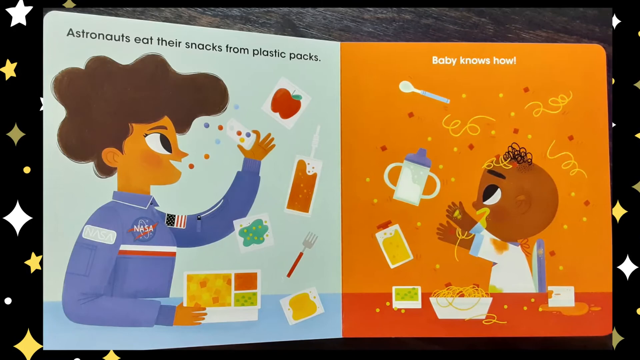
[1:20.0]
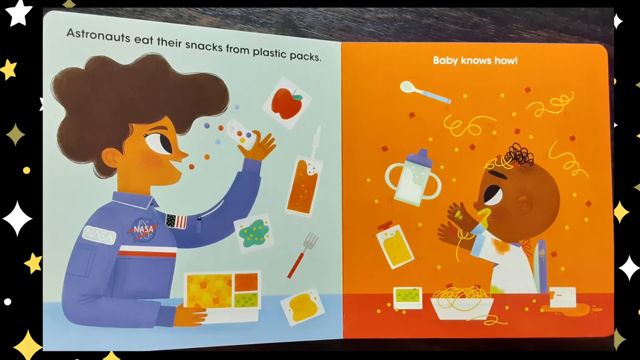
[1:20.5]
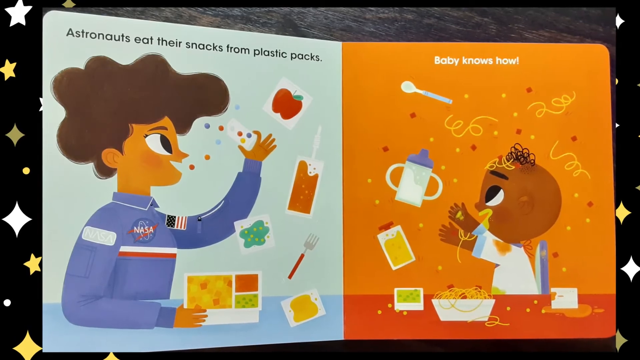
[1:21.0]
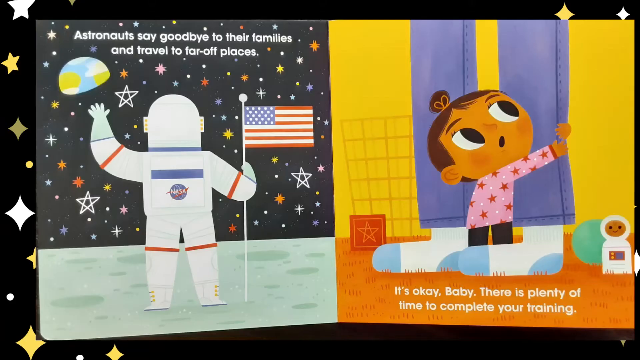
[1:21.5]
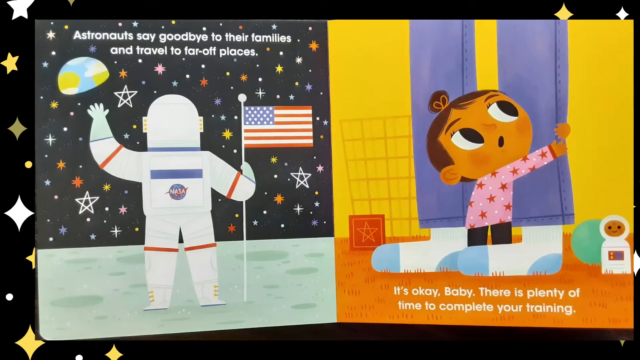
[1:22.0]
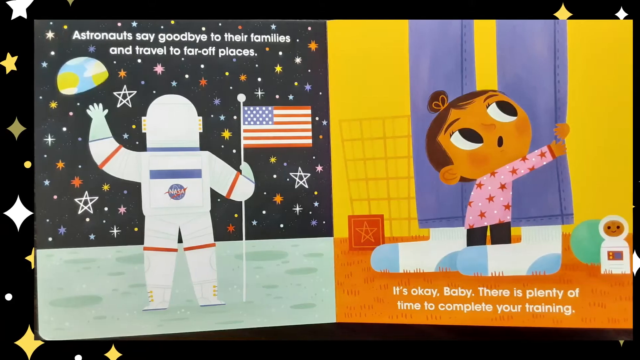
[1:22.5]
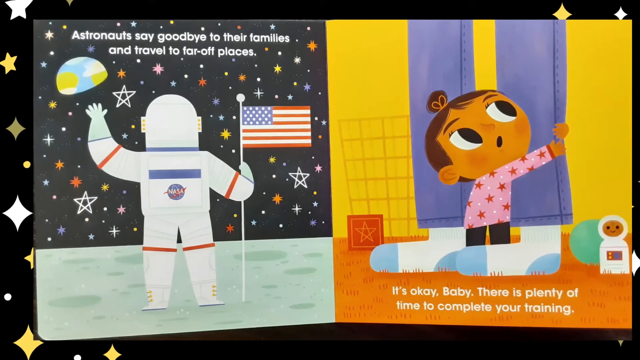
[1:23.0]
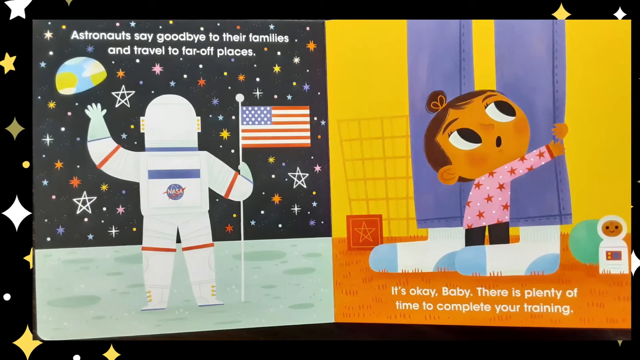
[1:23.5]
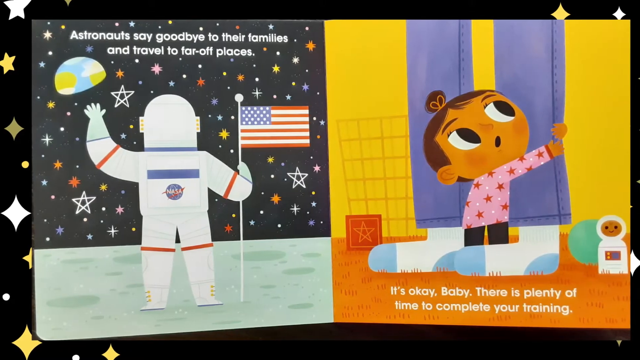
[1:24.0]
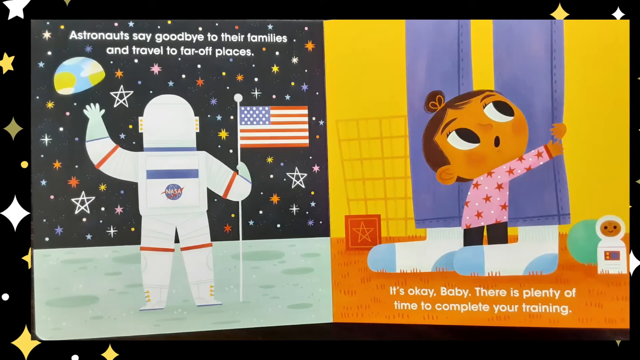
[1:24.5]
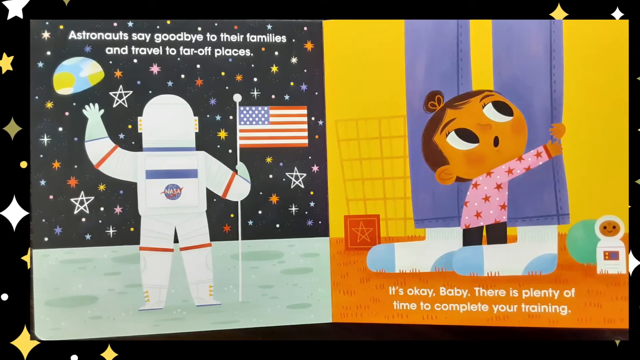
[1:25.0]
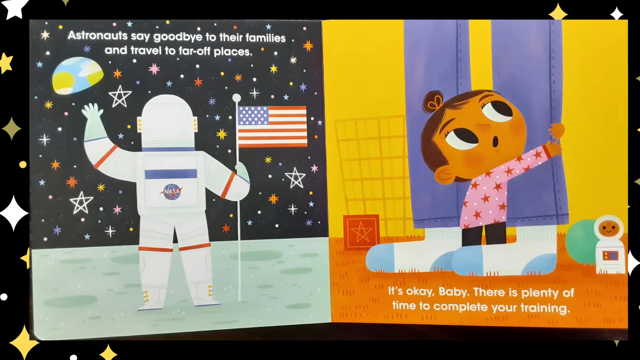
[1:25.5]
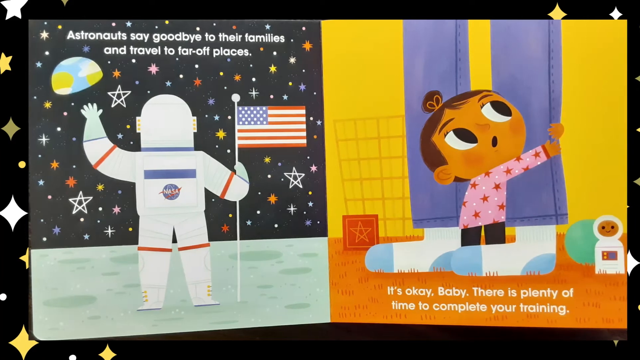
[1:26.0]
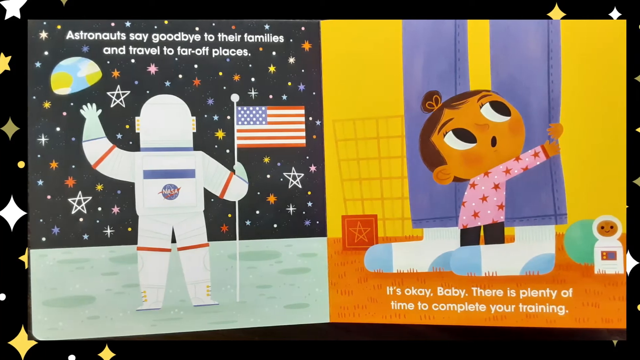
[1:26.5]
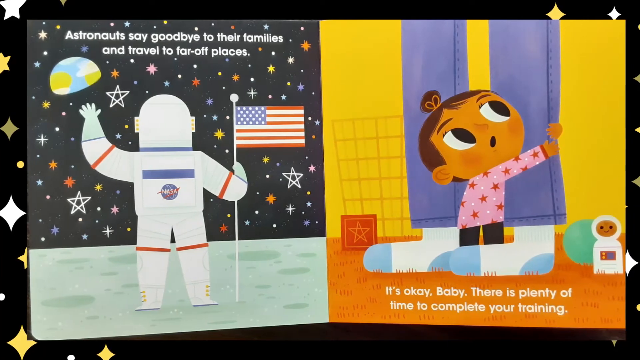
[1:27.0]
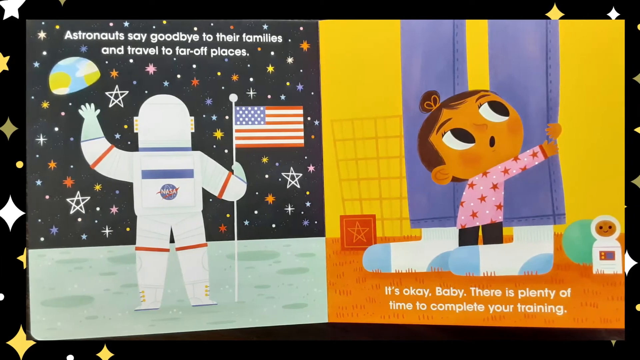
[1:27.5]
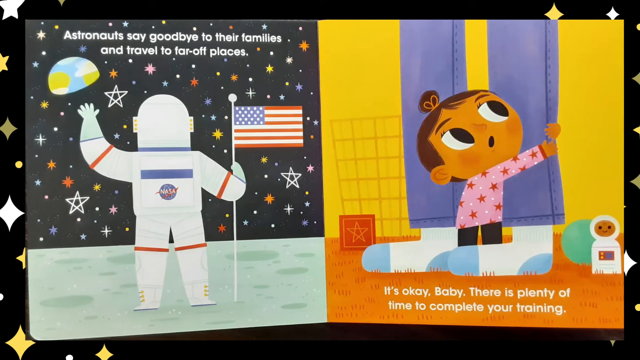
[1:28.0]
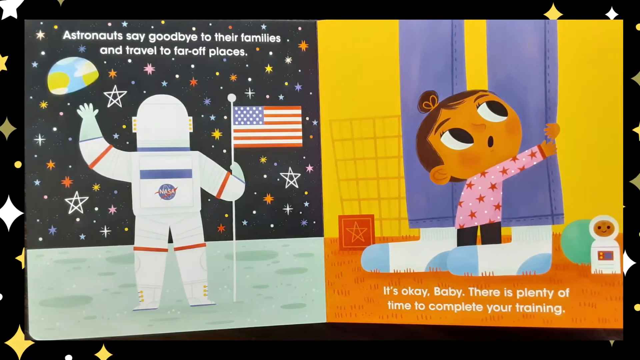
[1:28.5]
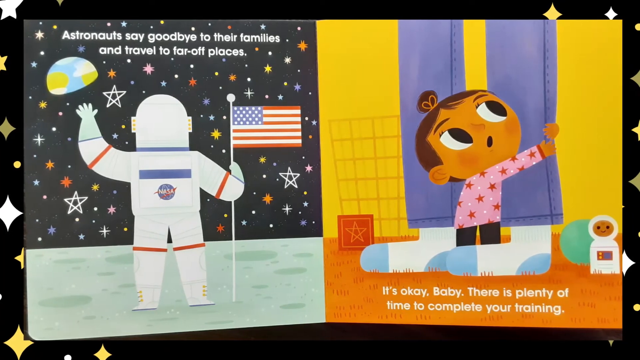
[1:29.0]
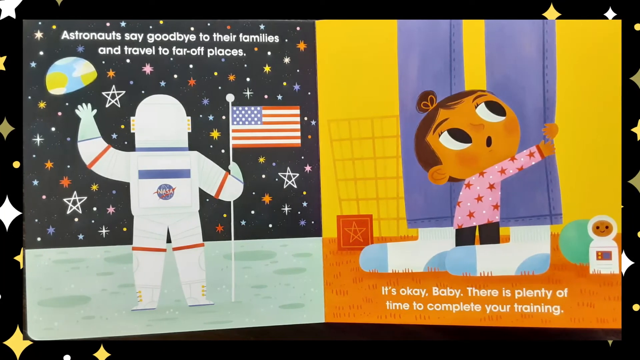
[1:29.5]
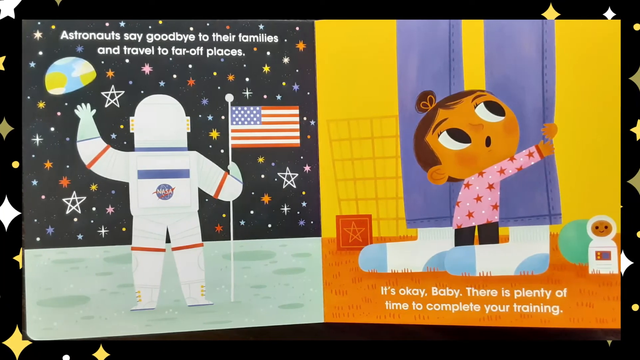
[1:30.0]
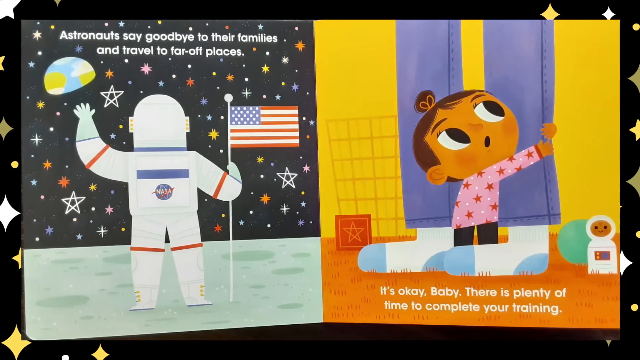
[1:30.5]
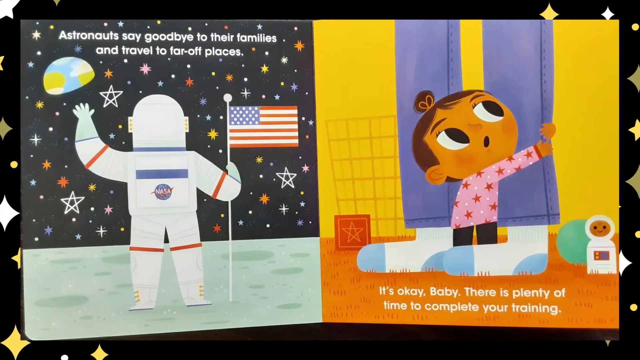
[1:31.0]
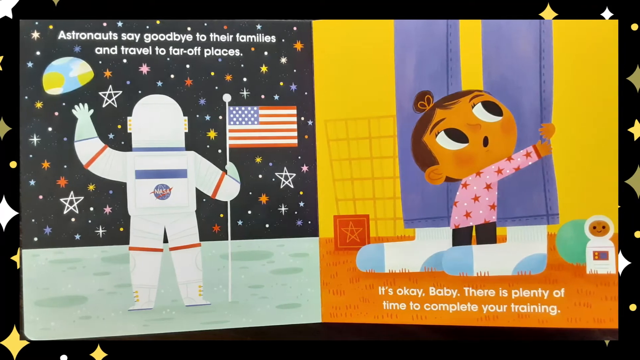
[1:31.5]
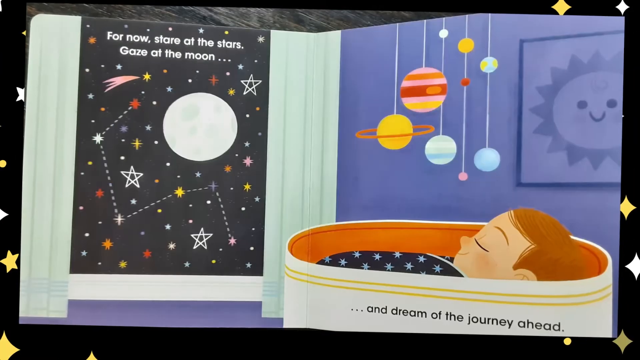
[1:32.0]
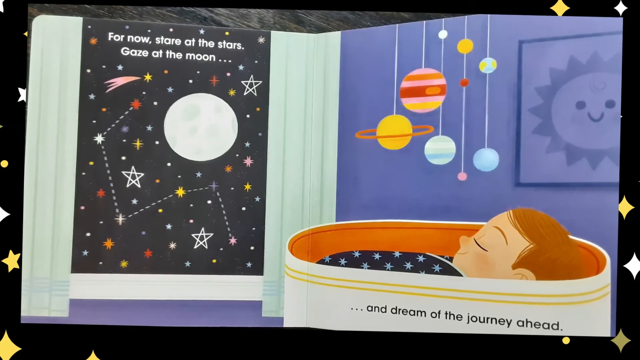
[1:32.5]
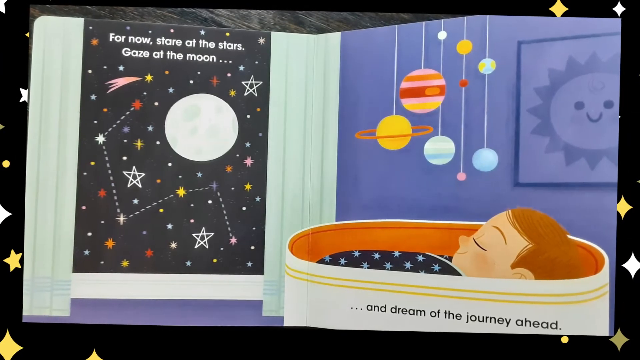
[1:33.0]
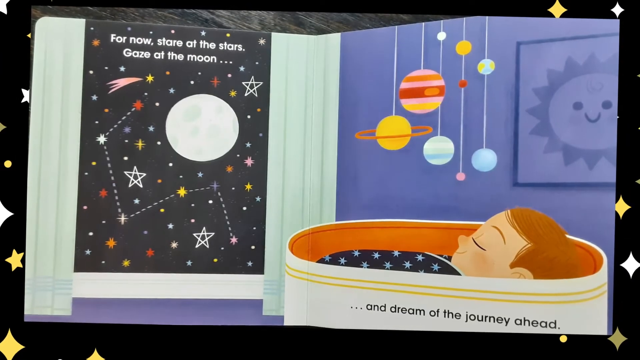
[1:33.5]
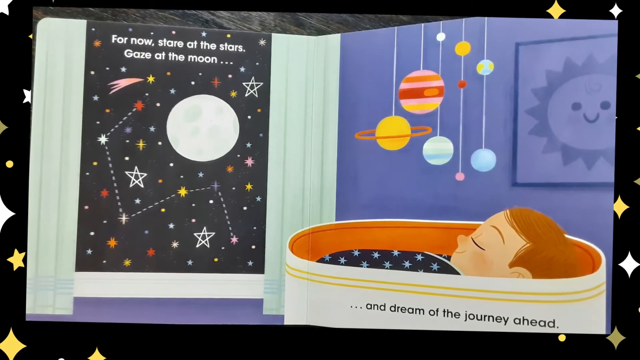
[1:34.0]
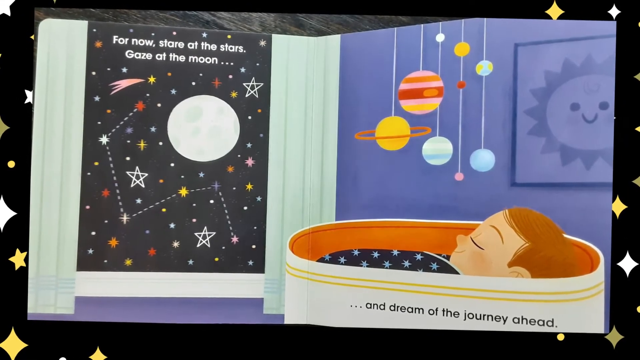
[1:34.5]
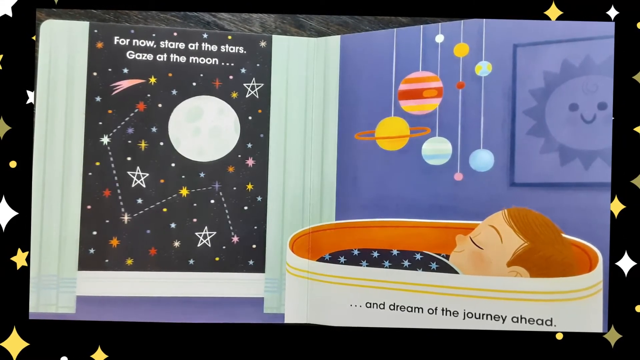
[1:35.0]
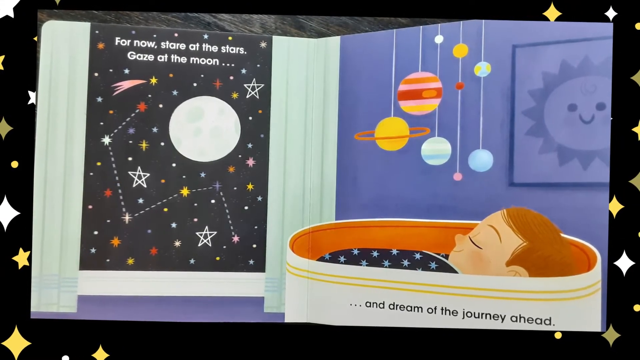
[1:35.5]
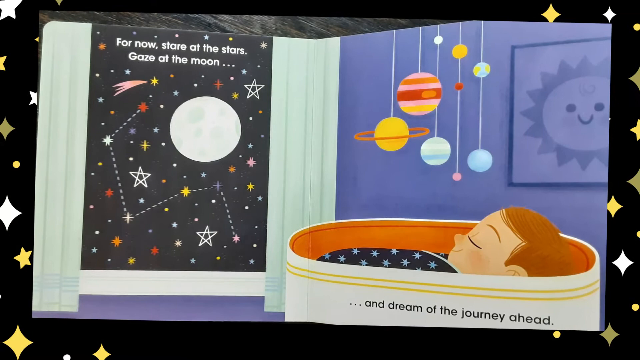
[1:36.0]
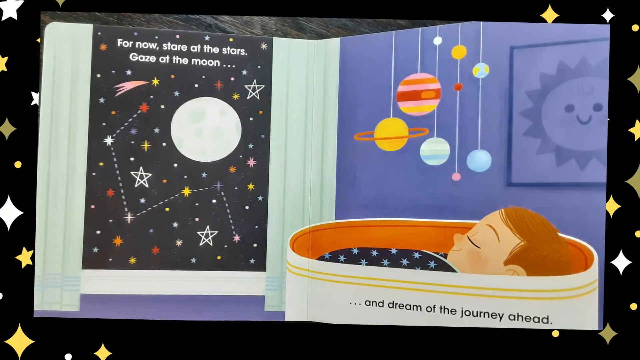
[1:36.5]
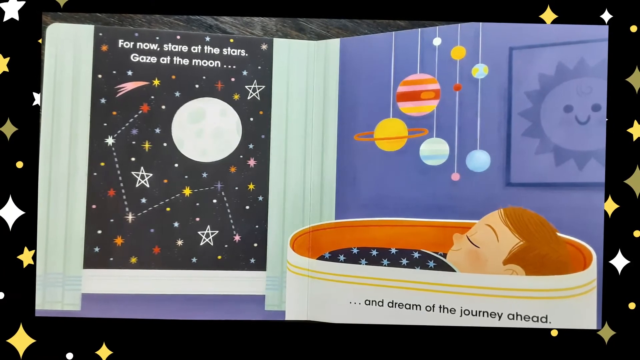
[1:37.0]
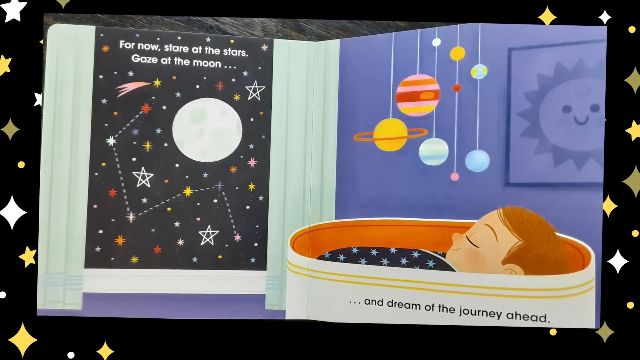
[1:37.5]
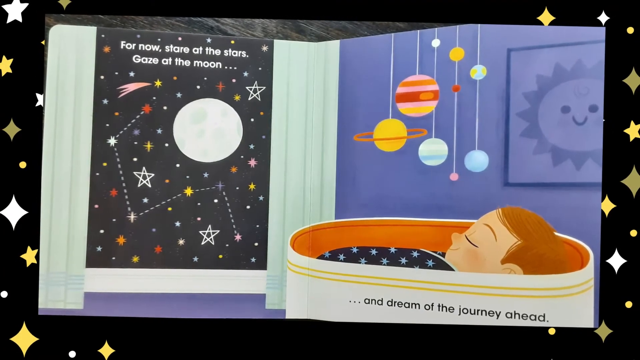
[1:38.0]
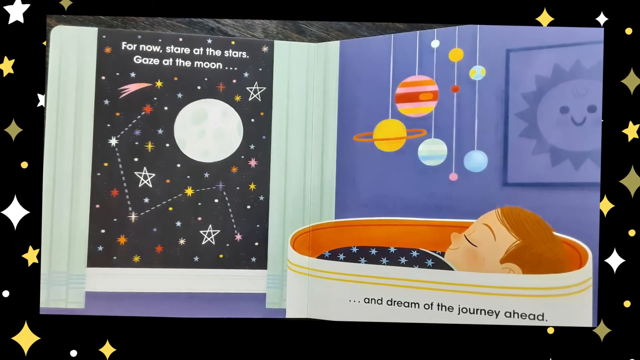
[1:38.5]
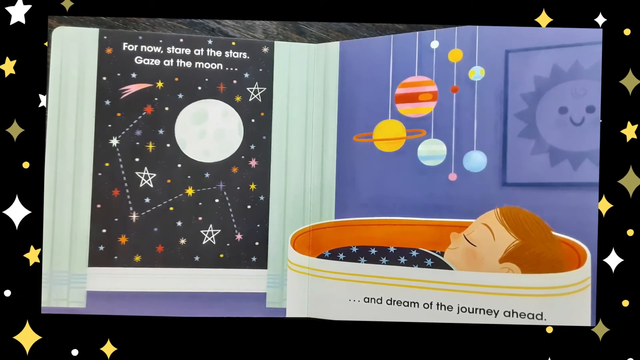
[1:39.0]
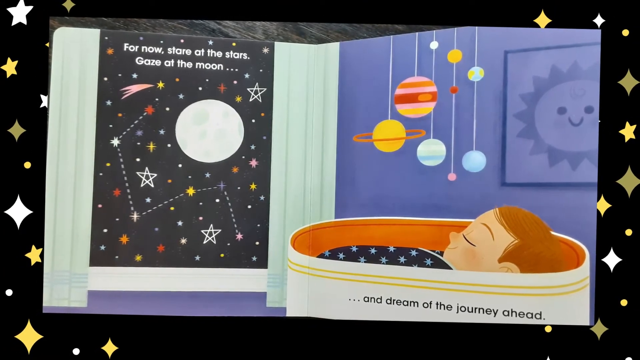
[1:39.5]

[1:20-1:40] An astronaut looks away while holding the U.S. flag, with different colored stars above. Text reads "Astronauts say goodbye to their families and travel to far off places." On the right-hand side, a baby girl holds the leg of her parent, who wears blue and white socks. A mini astronaut is on the right-hand side of the same page as the baby girl, who wears a pink top with white dots and stars. The caption reads "it's okay baby, there is plenty of time to complete your training". The book flips to a baby sleeping in a basket and the Moon, and then the view zooms out.